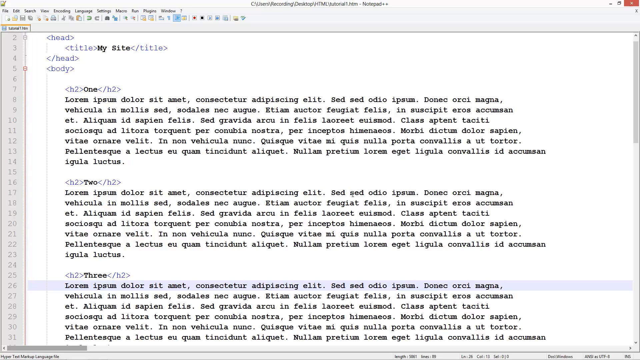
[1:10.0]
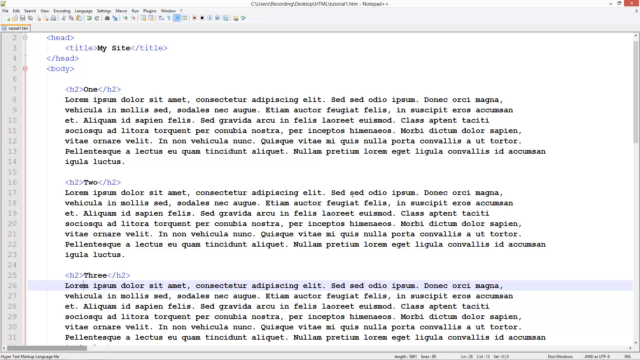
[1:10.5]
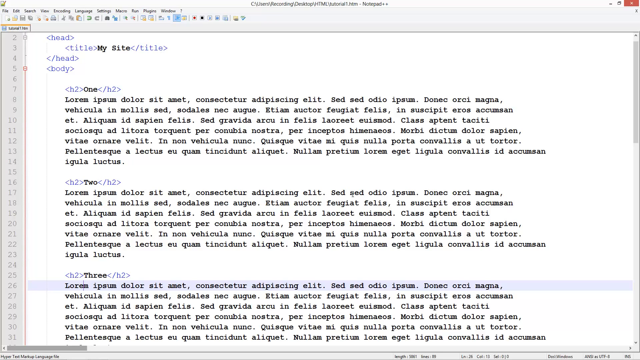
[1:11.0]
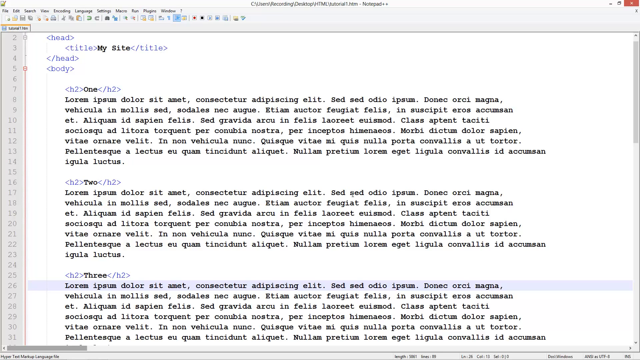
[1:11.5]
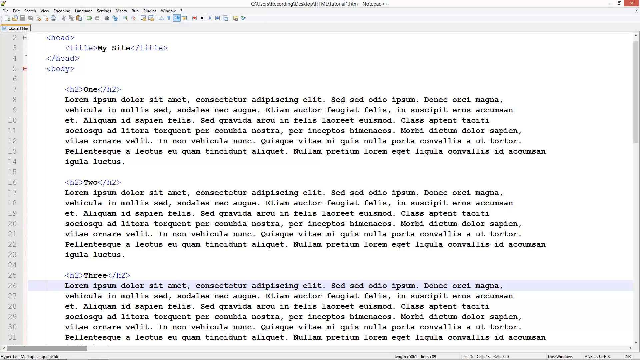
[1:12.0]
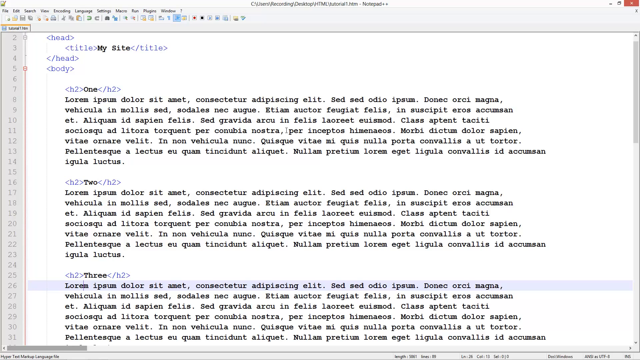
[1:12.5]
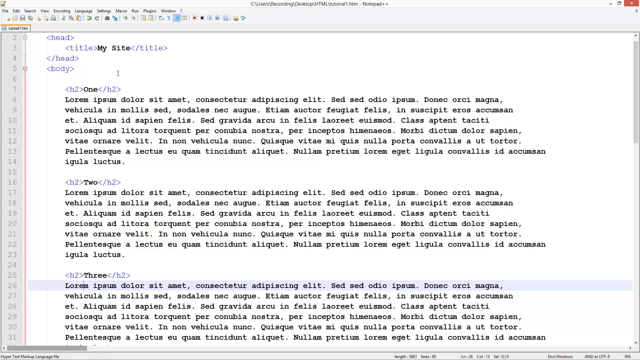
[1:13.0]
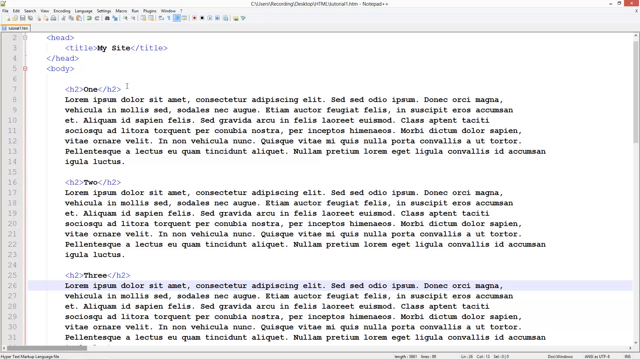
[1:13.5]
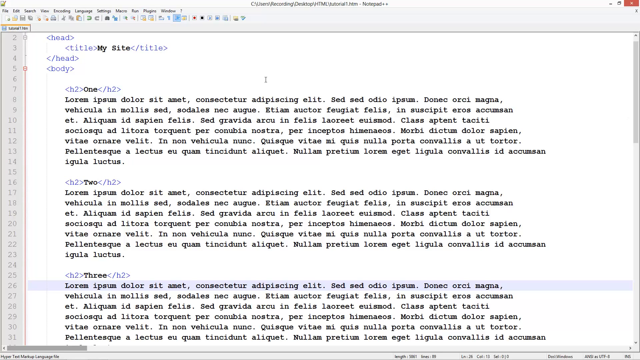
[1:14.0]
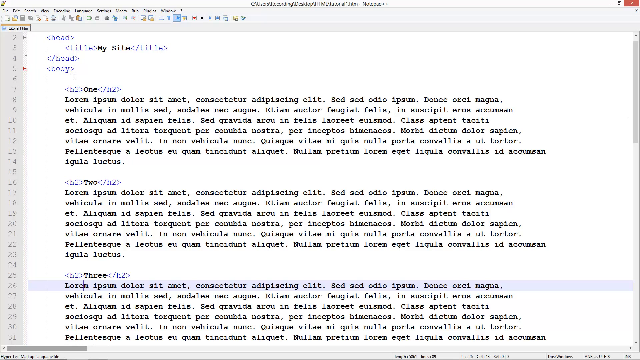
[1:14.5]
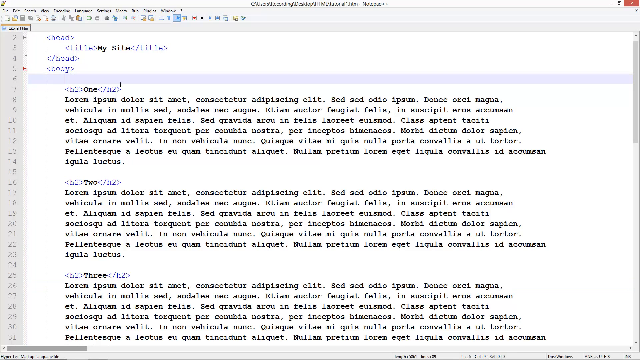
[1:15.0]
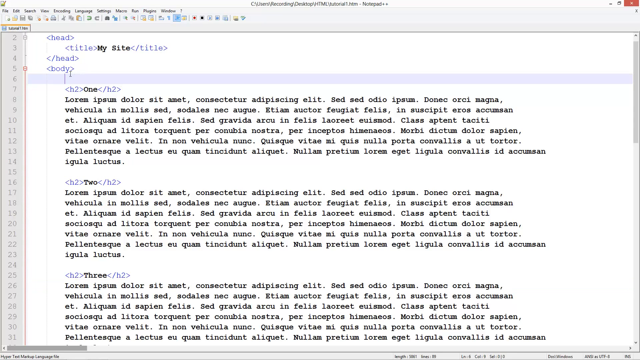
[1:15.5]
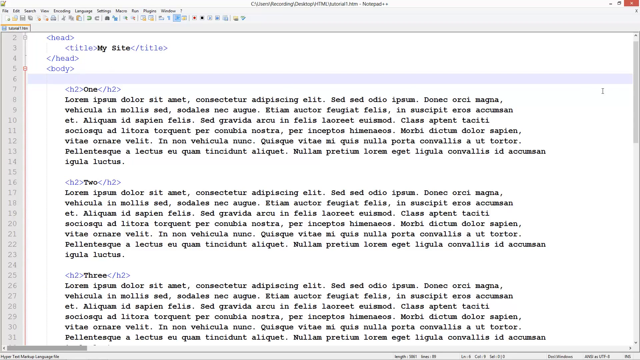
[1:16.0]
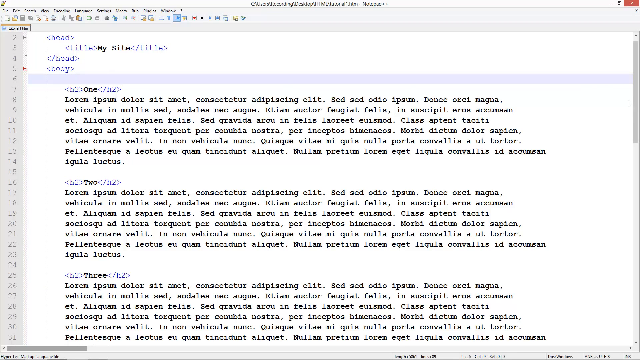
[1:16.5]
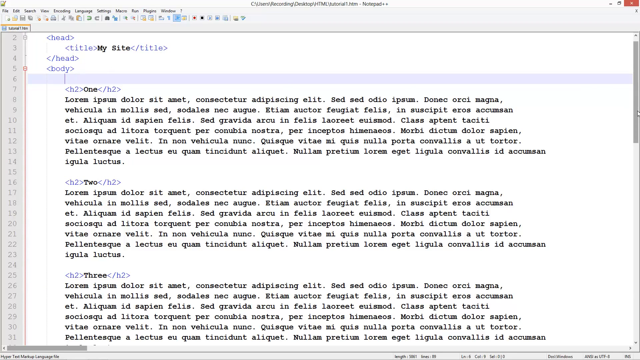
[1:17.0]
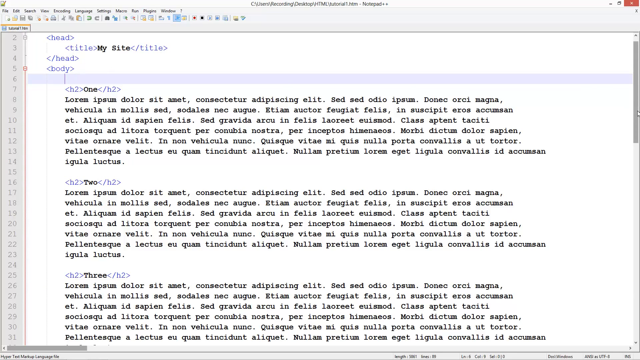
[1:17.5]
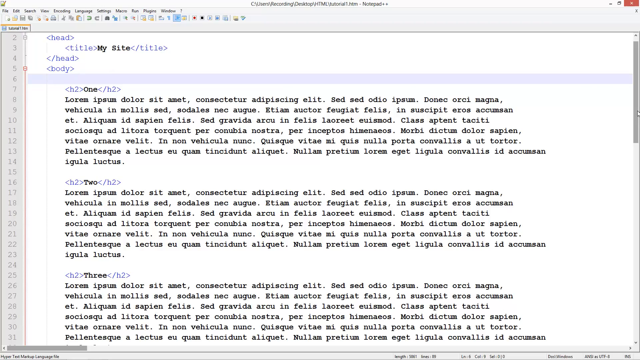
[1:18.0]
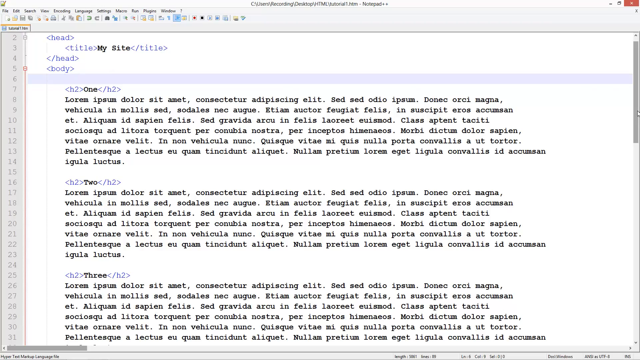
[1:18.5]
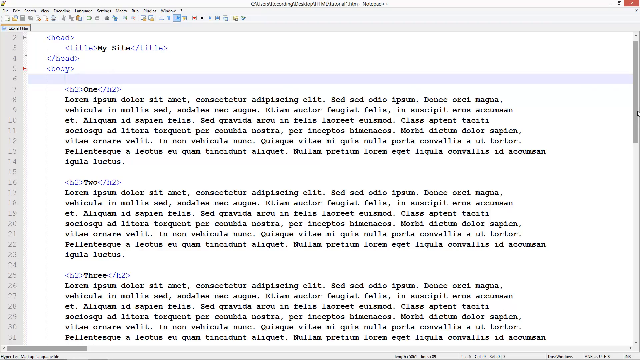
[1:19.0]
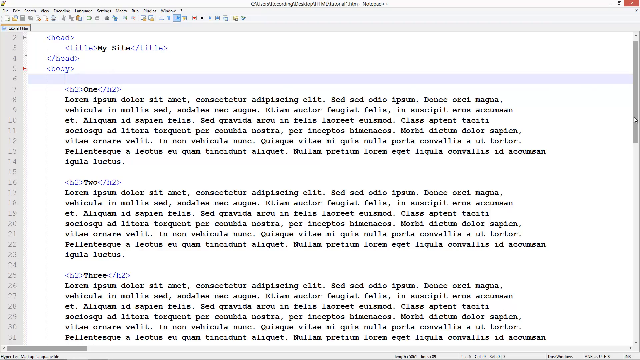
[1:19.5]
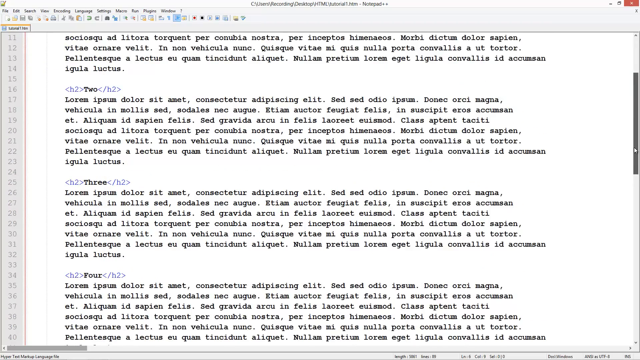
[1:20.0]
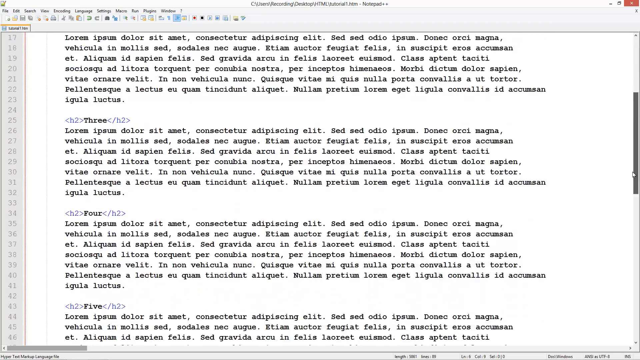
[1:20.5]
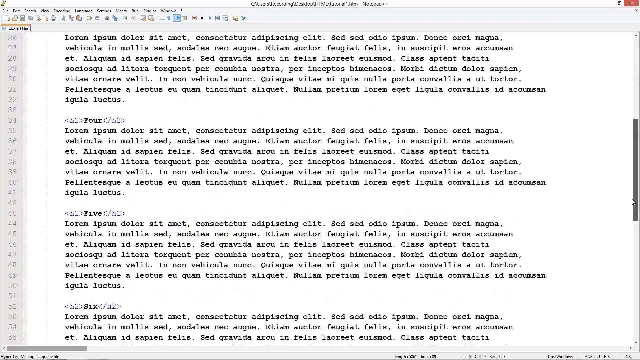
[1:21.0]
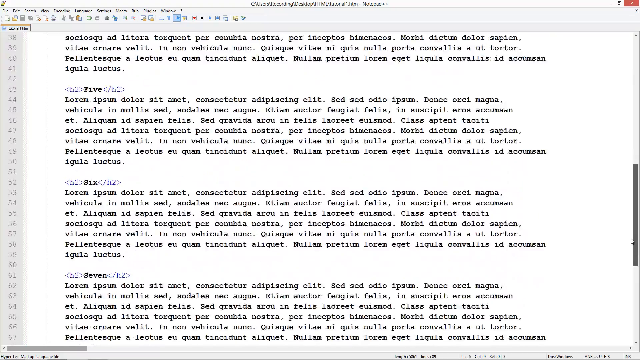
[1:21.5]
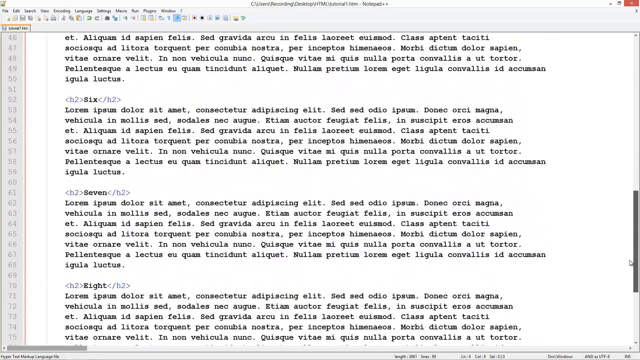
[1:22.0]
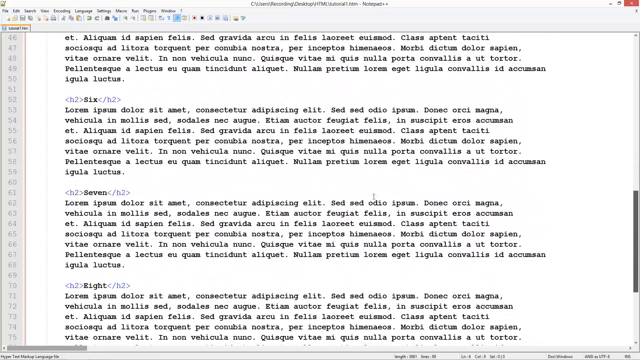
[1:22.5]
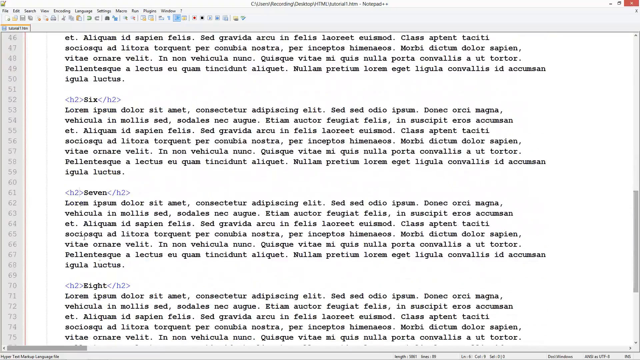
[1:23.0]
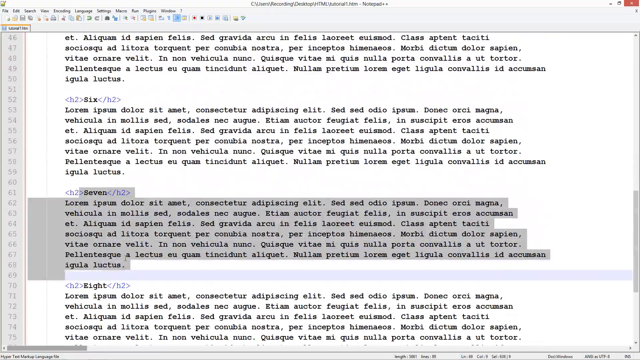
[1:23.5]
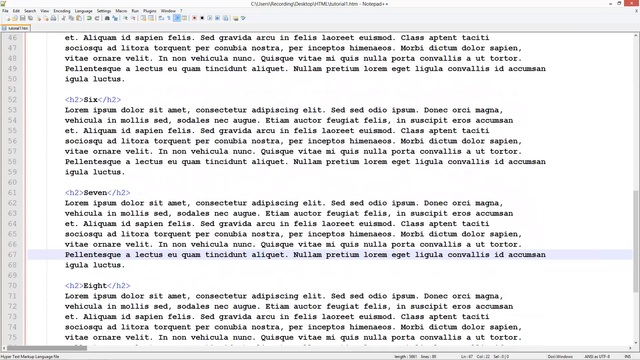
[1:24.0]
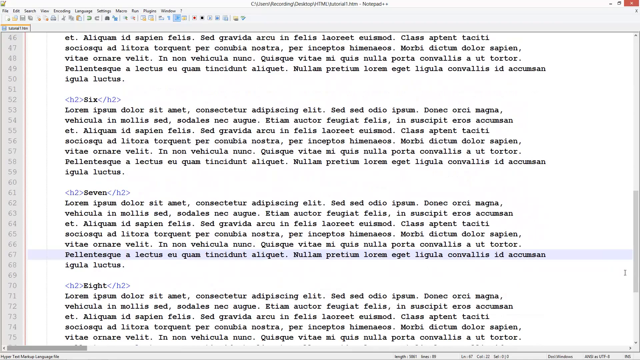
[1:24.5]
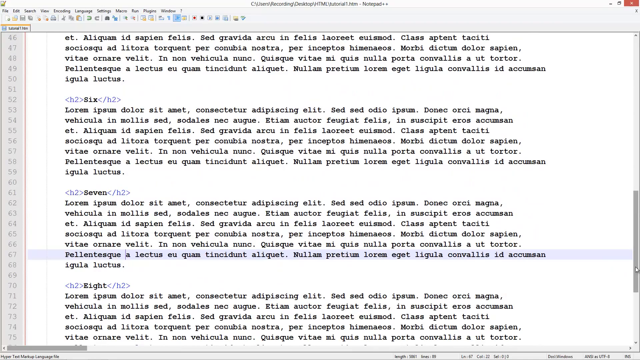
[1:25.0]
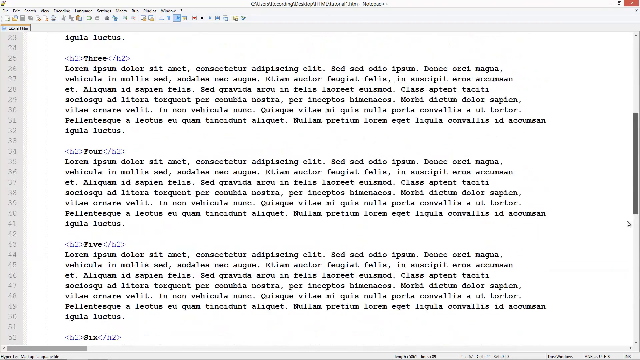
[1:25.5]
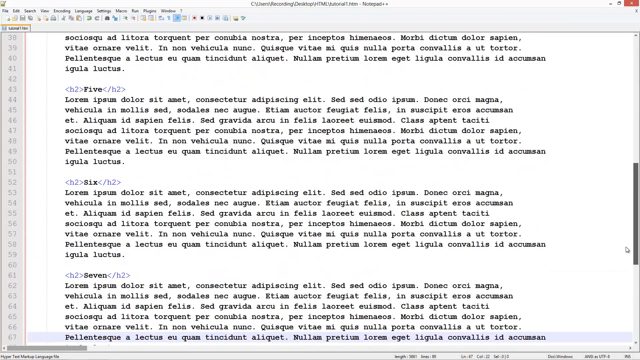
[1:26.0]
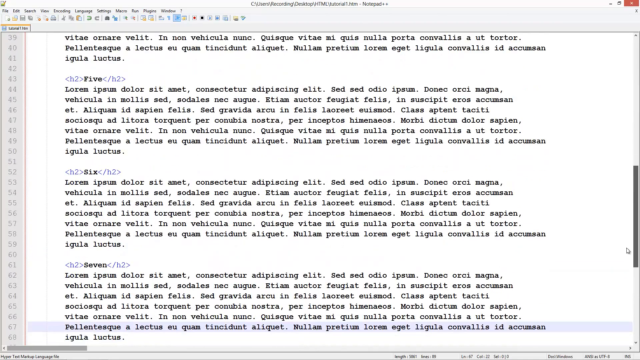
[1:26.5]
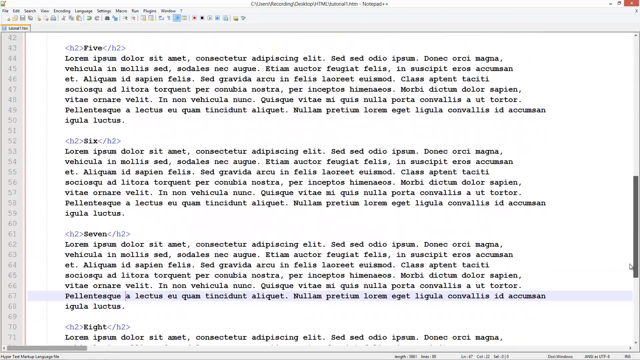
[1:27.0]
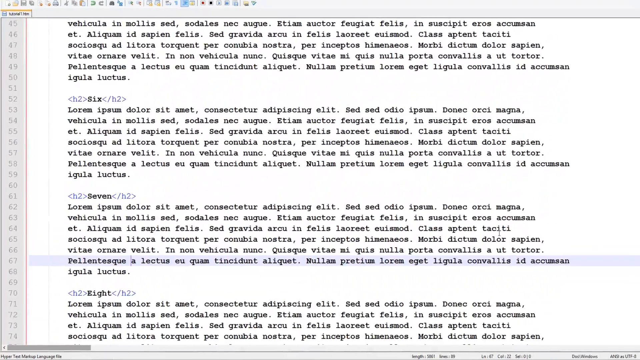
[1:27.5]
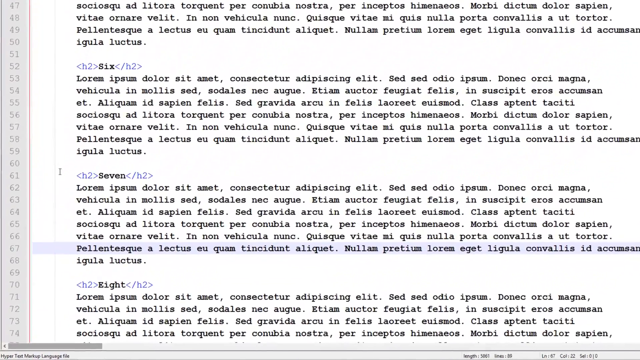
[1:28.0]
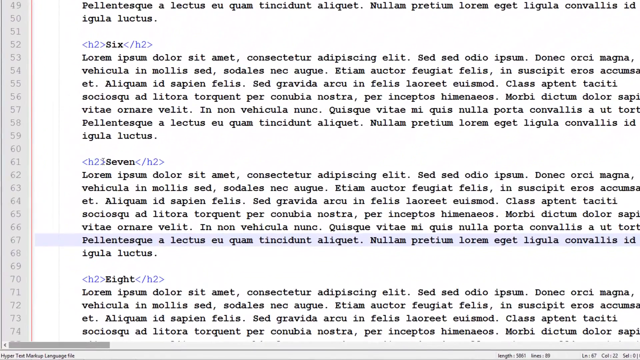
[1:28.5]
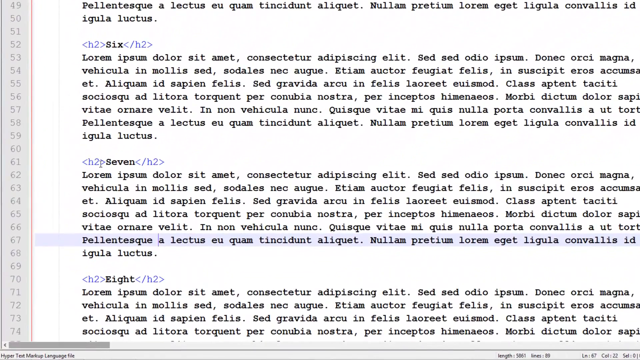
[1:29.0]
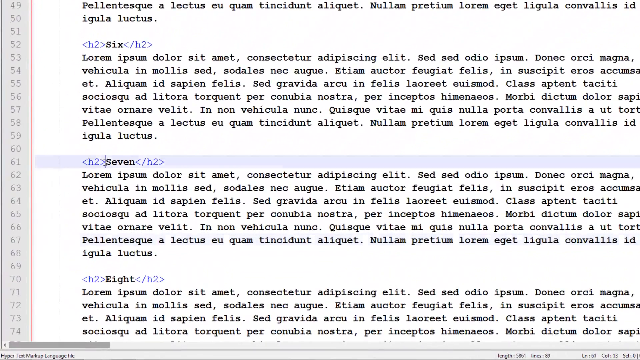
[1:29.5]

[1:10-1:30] The person is in what seems to be a text document, hard to make out. A line, possibly line six, appears highlighted, then the view scrolls down and a highlight appears on what may be line 67. The view scrolls back up and zooms in, making the text easier to see. The highlighted line is line 67; its words do not seem to be real words, apparently template text. It reads "pelmentesque," then "a," then "lectus," then "eu," then "qua" followed by a letter that is either m or n.